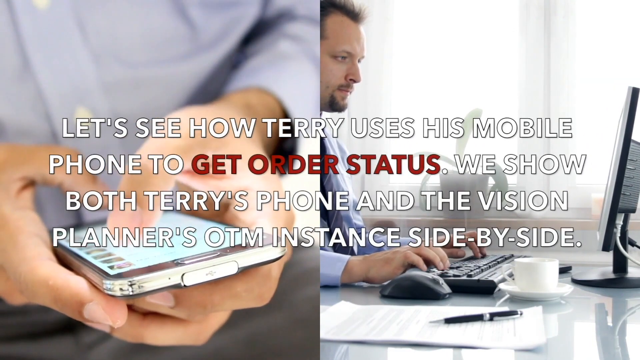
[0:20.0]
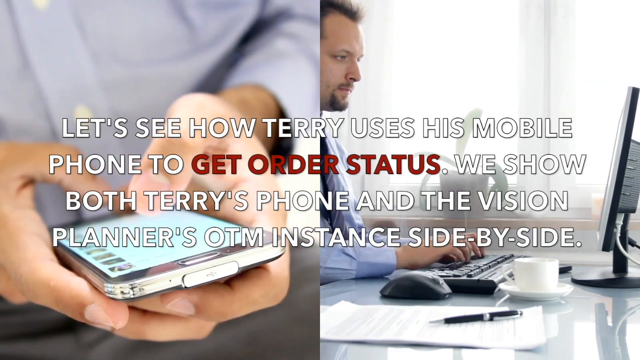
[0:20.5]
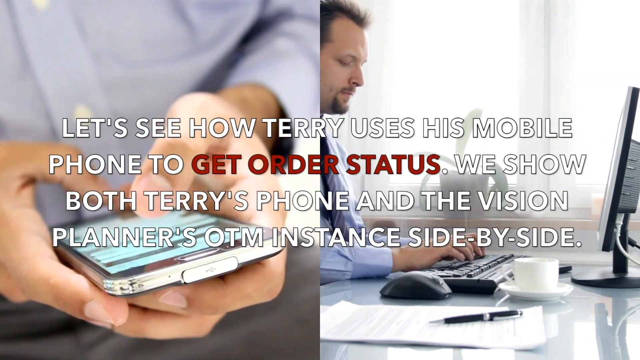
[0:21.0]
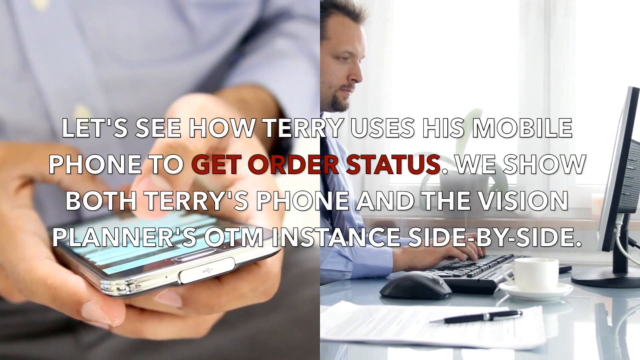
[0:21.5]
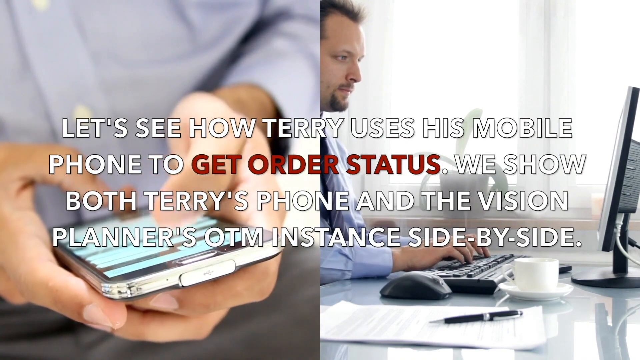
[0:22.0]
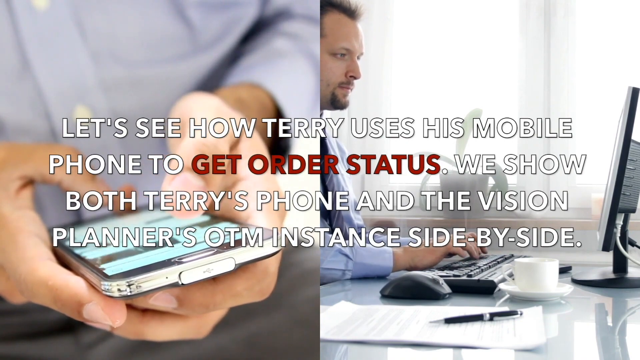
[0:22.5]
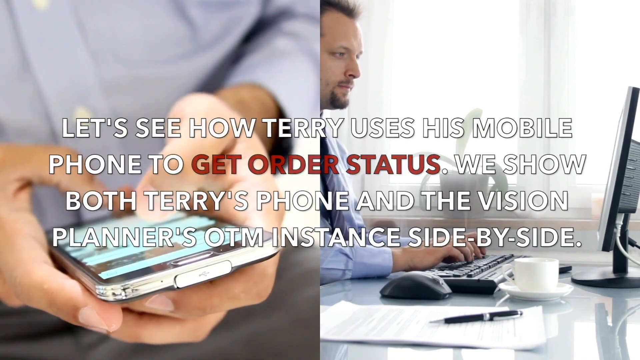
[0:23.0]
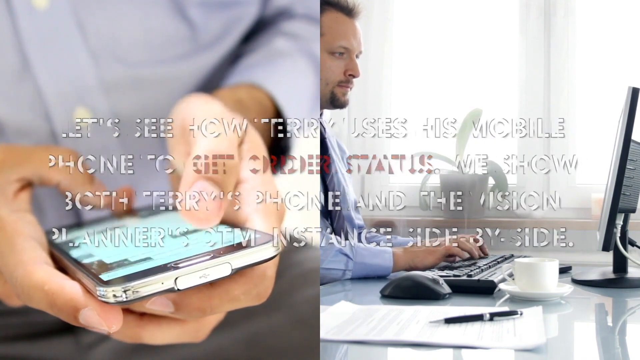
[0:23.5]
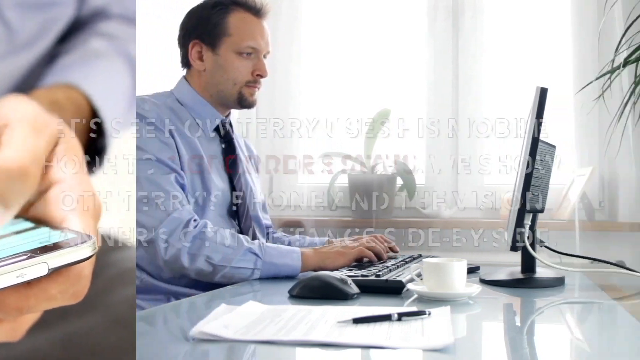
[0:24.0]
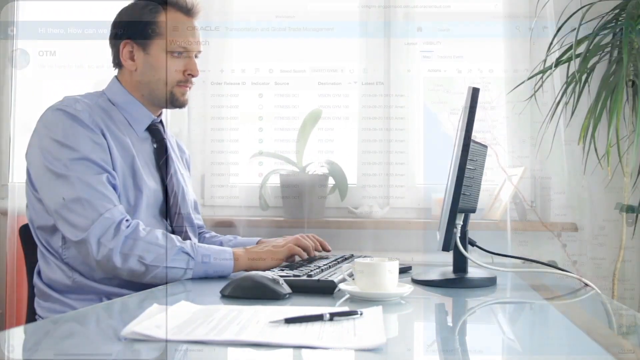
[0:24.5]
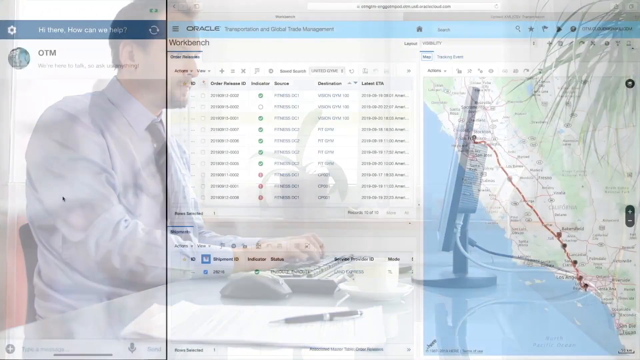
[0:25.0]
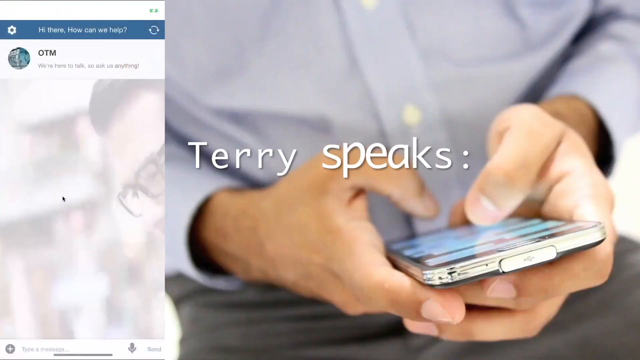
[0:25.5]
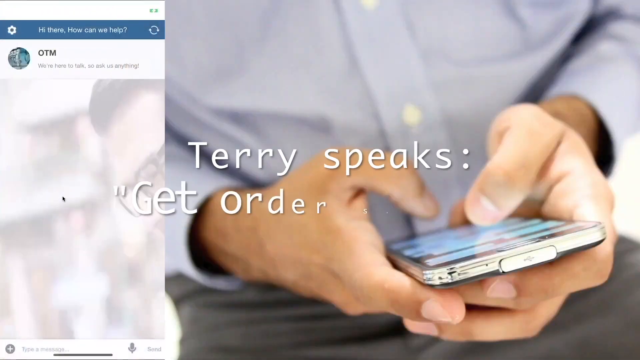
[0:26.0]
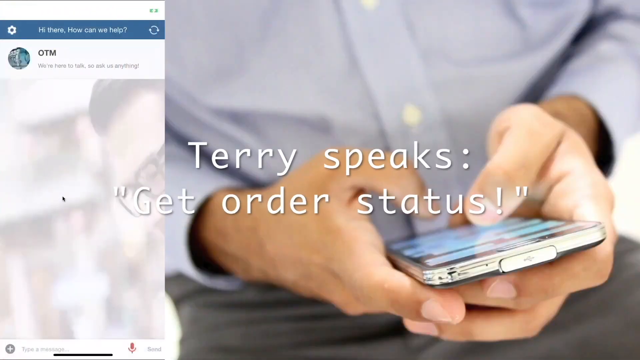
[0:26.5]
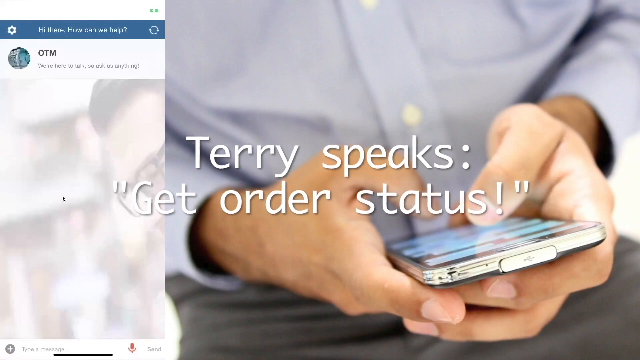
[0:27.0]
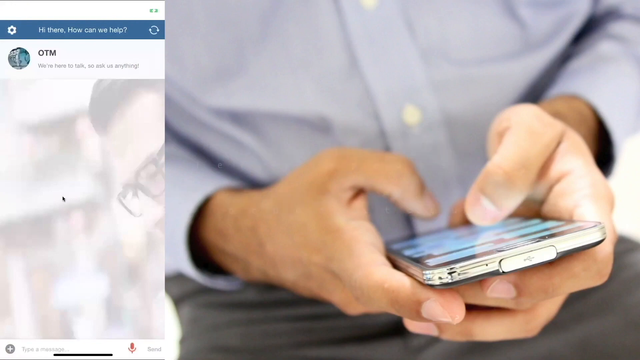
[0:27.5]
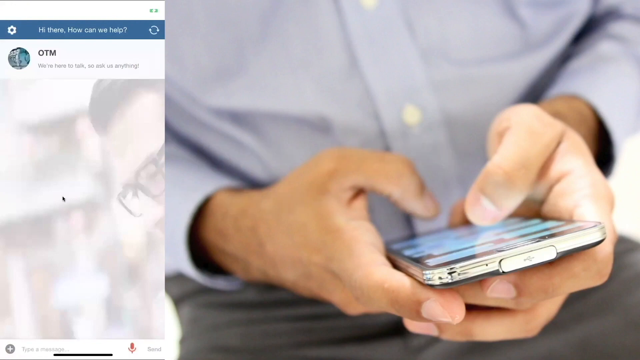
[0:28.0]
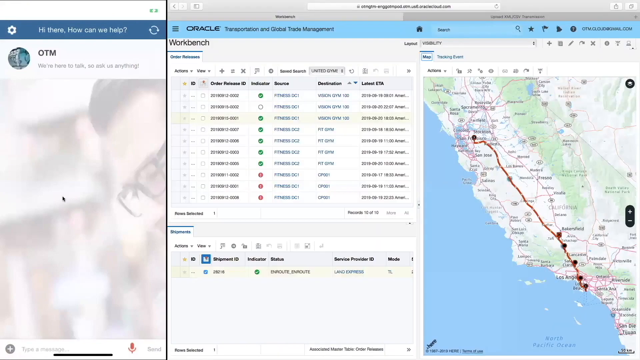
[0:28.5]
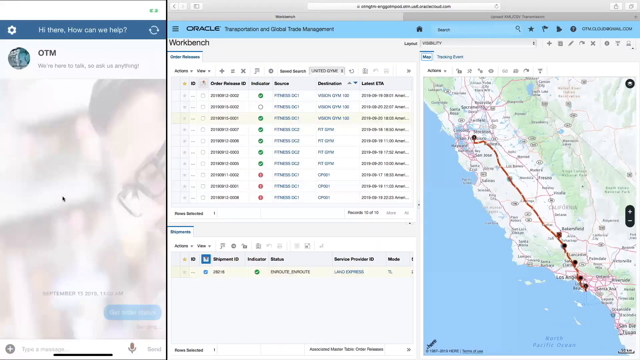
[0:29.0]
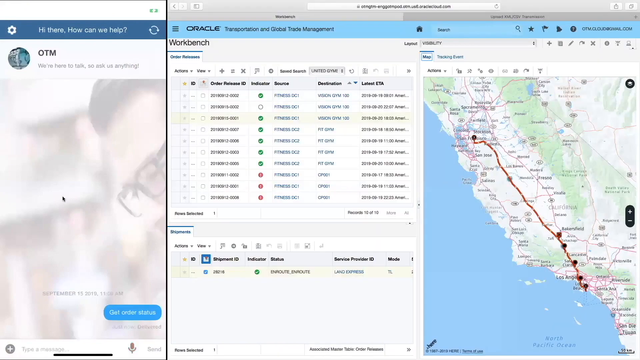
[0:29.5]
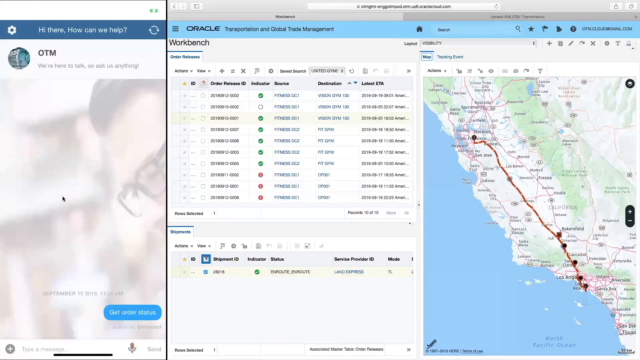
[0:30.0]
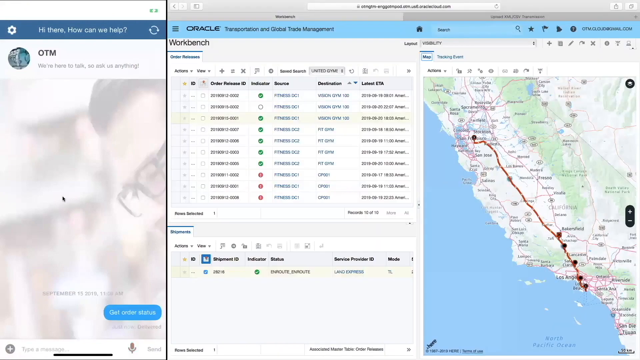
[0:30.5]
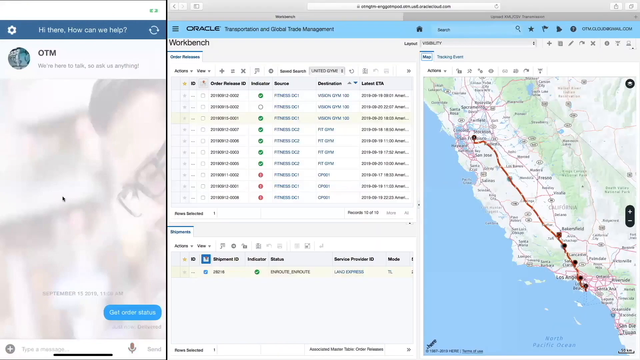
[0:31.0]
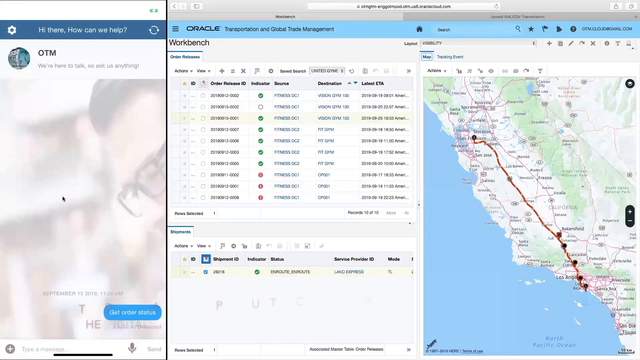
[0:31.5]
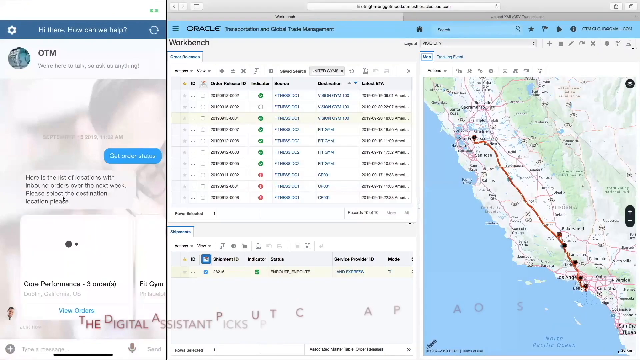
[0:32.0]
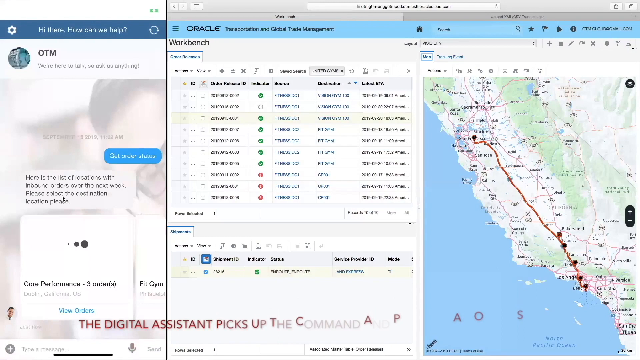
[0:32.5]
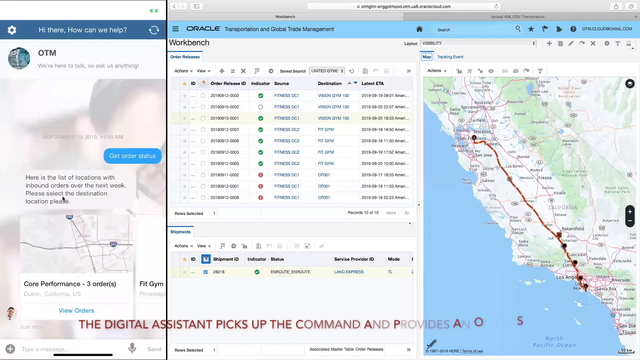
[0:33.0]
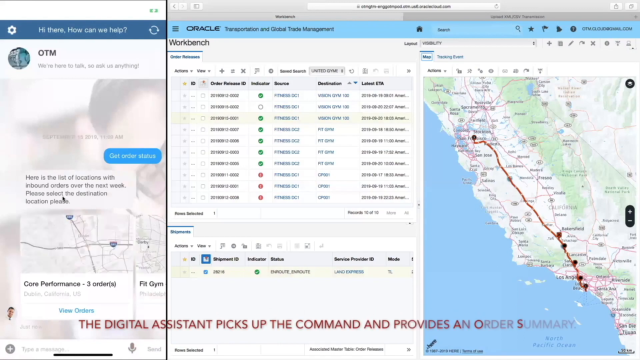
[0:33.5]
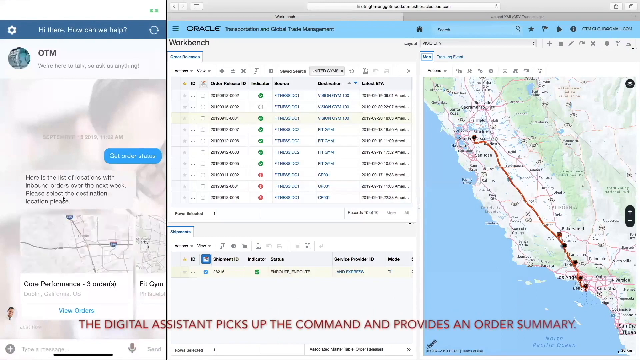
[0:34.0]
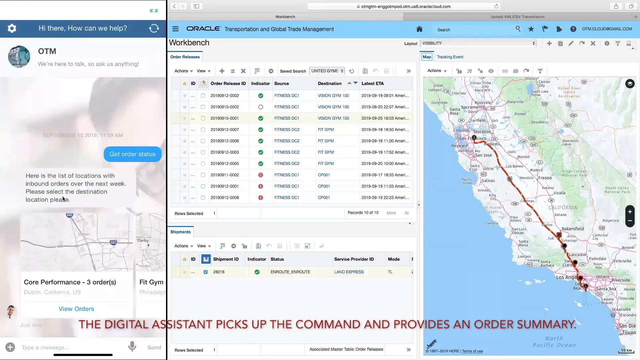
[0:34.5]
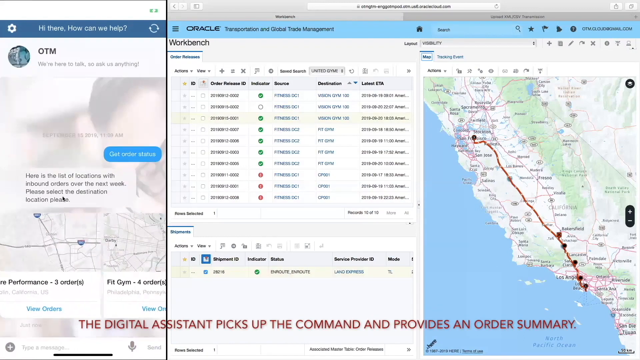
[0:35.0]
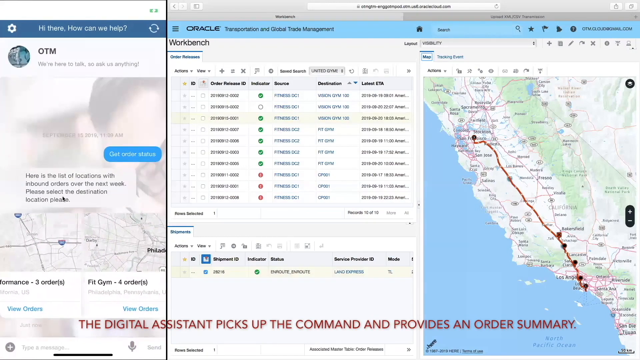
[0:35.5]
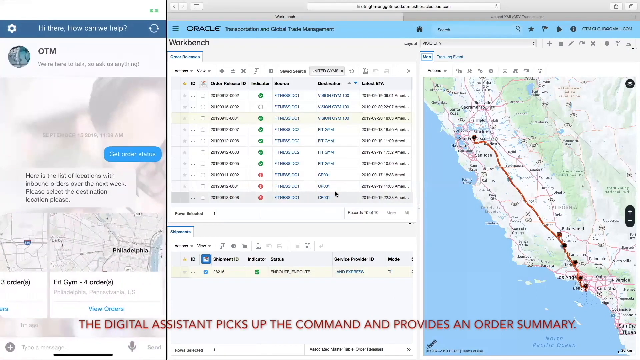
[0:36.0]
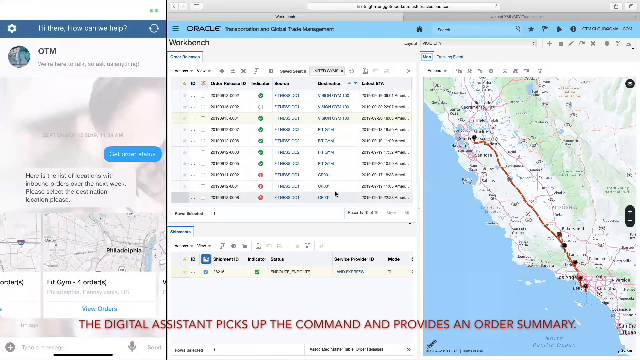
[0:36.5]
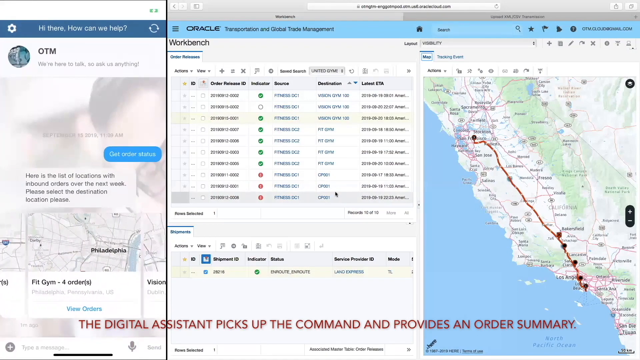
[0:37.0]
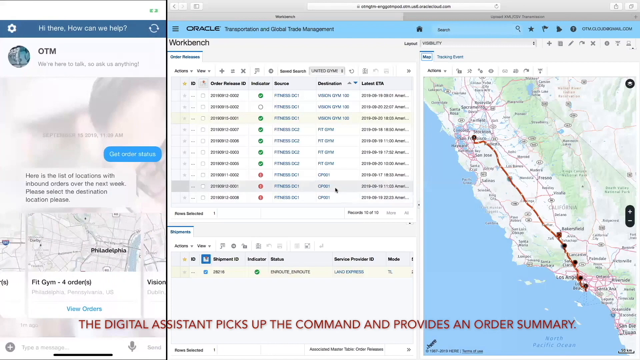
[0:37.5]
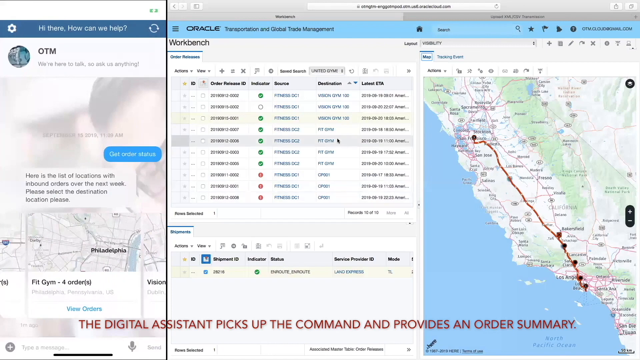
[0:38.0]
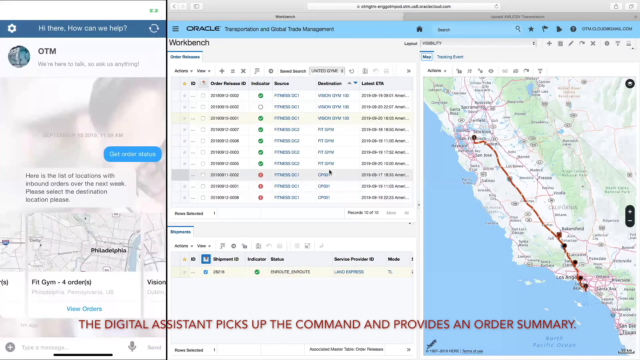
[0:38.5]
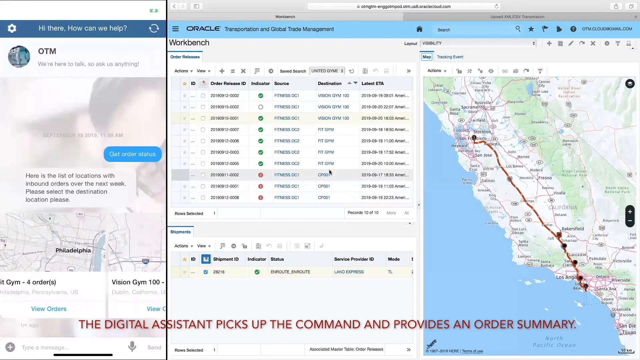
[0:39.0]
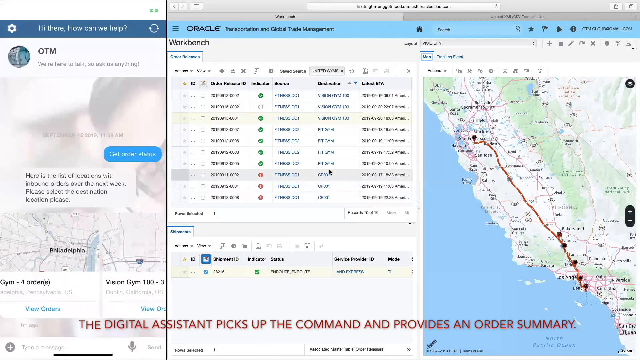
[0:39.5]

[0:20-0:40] The split screen continues, with the man working on the right and the moving image on the left, until the text disappears and the camera focuses on the right-side image. That disappears, and for a brief second an Oracle page appears, with a workbench on the right and a message board on the left. The right side changes back to the man on his phone, this time as a still image. The text "Terry speaks: get order status" appears on the screen and then disappears, and the Oracle page is shown once again. On the left side, the message board shows messages between the OTM and the user about getting an order status. Red text at the bottom reads "the digital assistant picks up the command and provides an order summary".